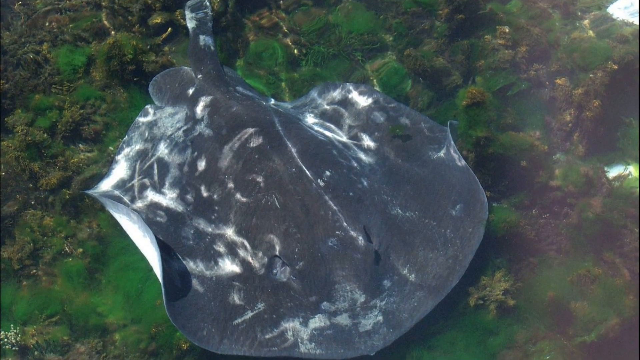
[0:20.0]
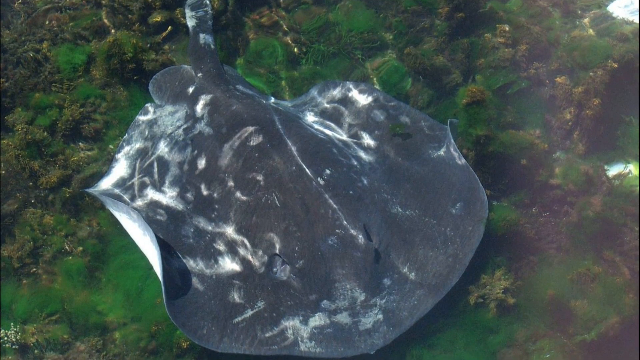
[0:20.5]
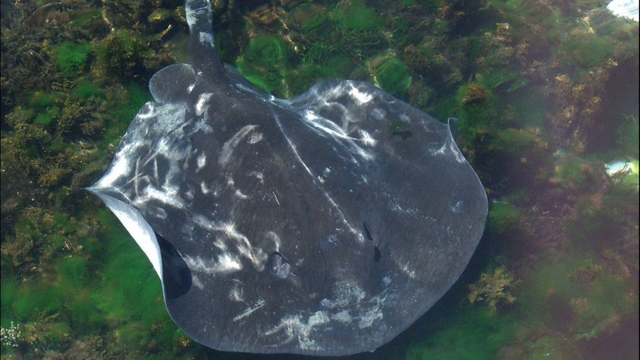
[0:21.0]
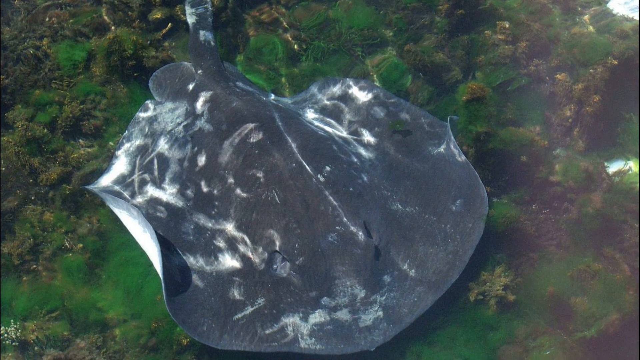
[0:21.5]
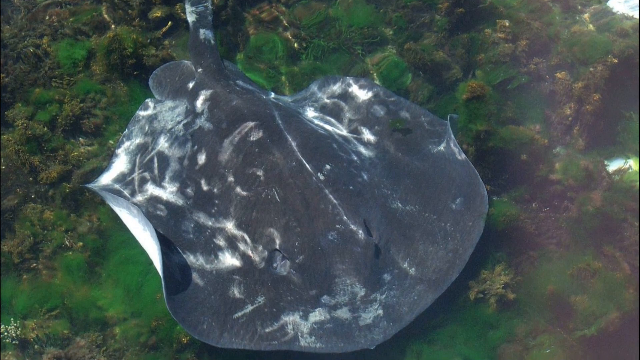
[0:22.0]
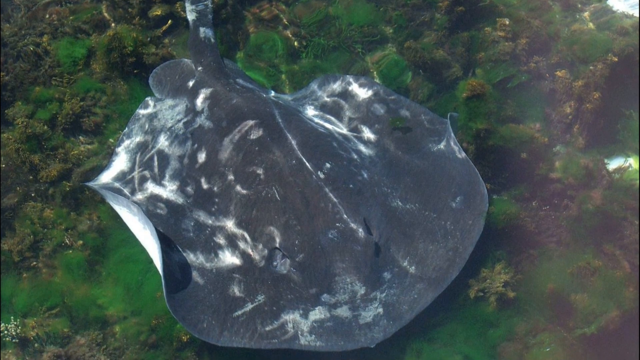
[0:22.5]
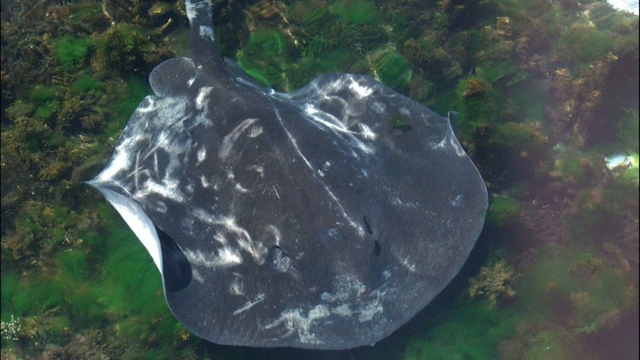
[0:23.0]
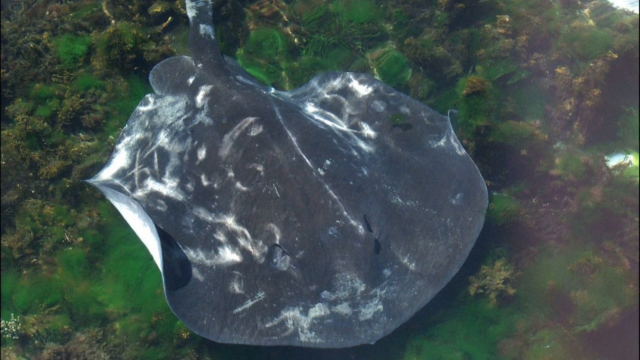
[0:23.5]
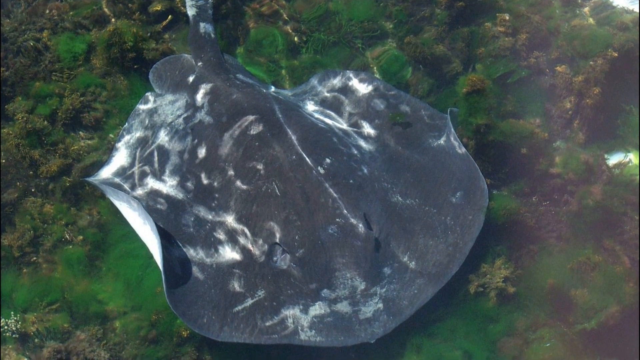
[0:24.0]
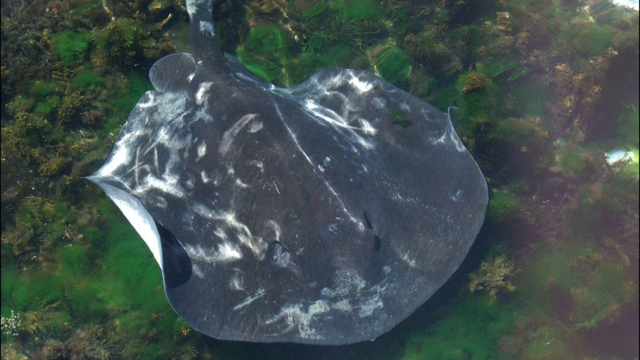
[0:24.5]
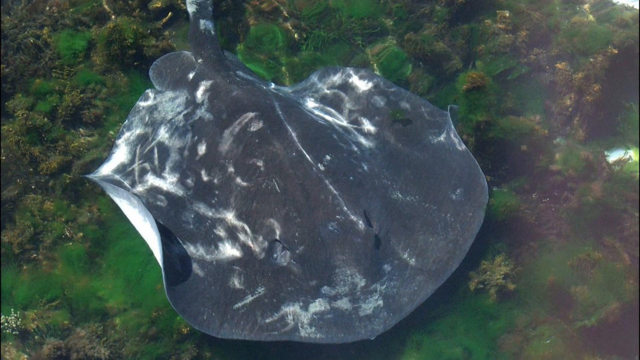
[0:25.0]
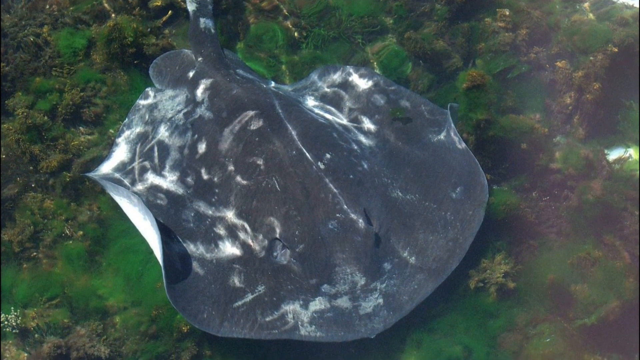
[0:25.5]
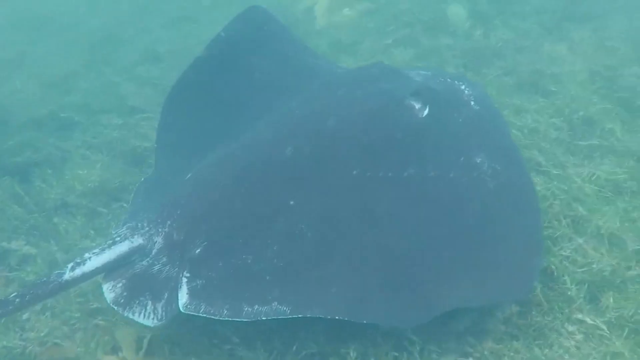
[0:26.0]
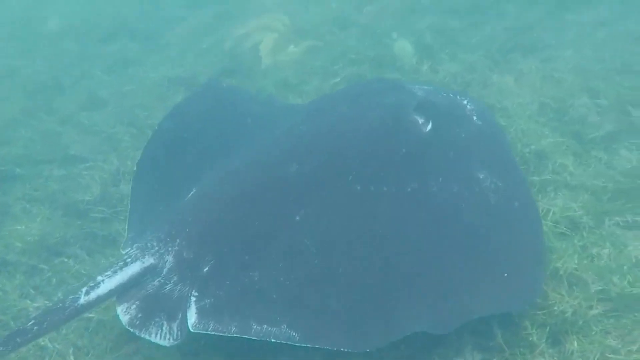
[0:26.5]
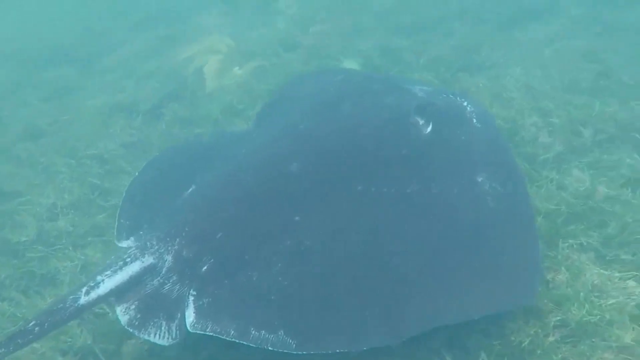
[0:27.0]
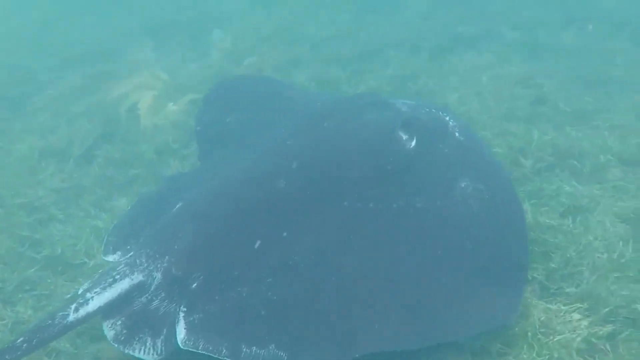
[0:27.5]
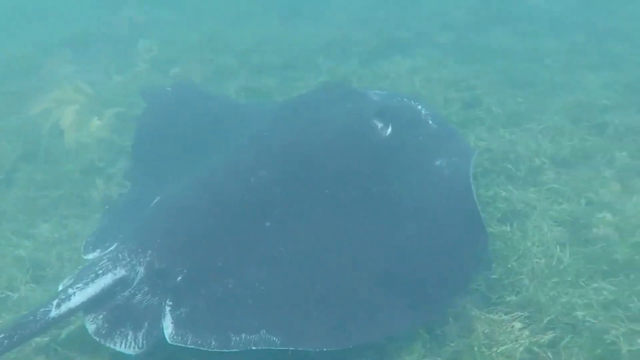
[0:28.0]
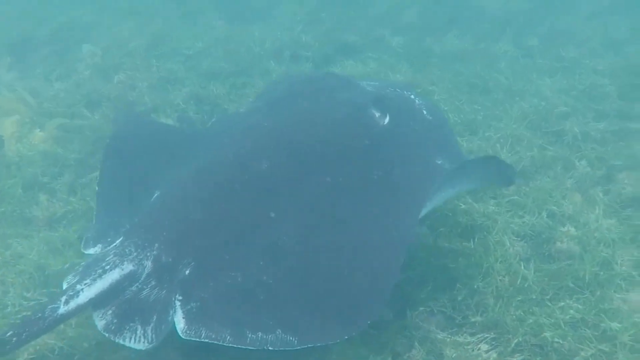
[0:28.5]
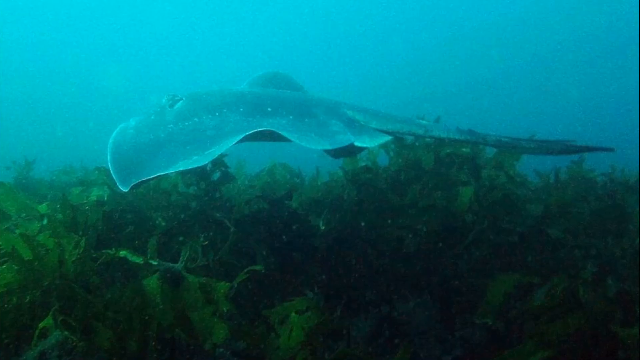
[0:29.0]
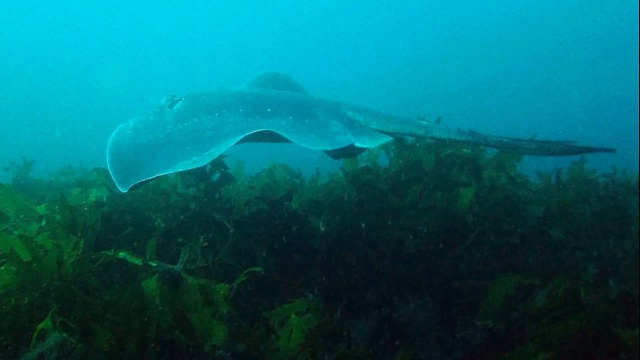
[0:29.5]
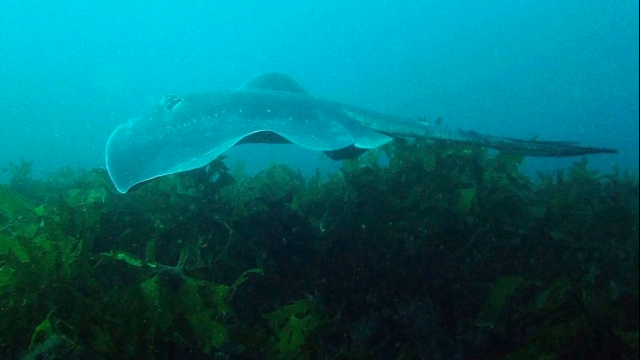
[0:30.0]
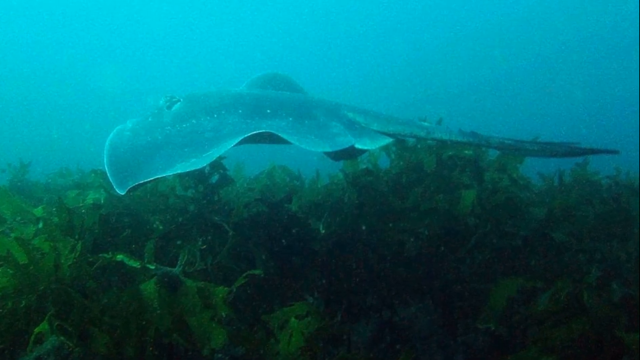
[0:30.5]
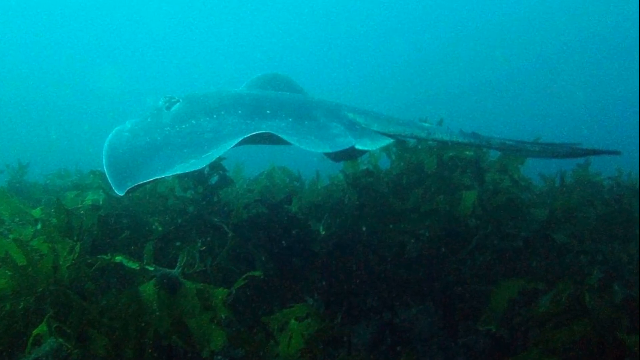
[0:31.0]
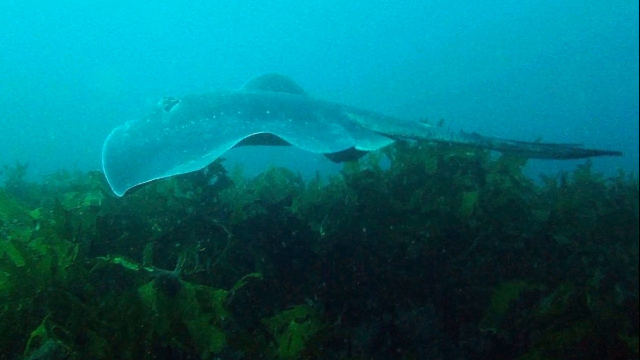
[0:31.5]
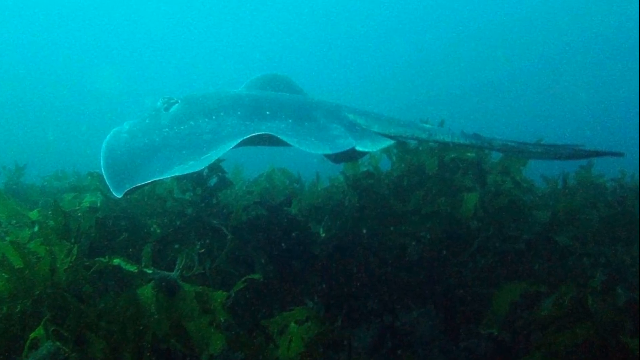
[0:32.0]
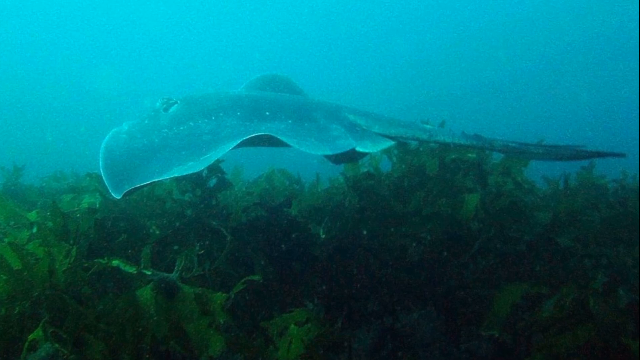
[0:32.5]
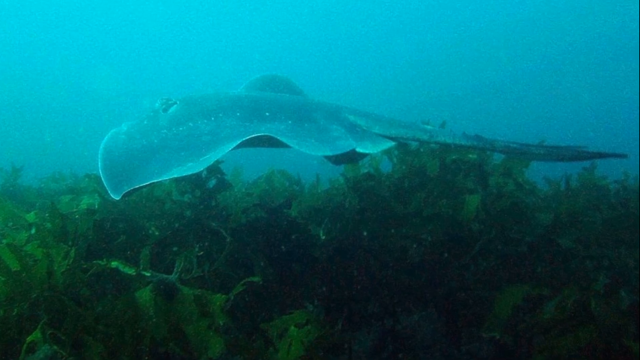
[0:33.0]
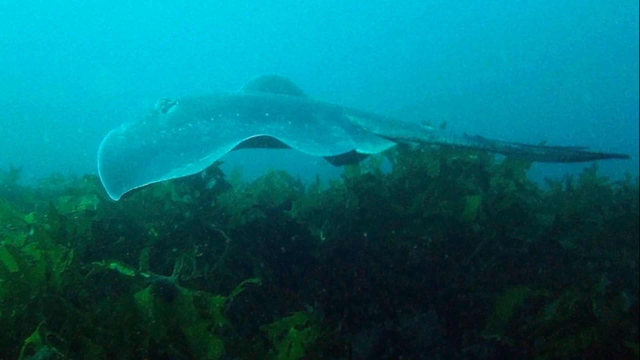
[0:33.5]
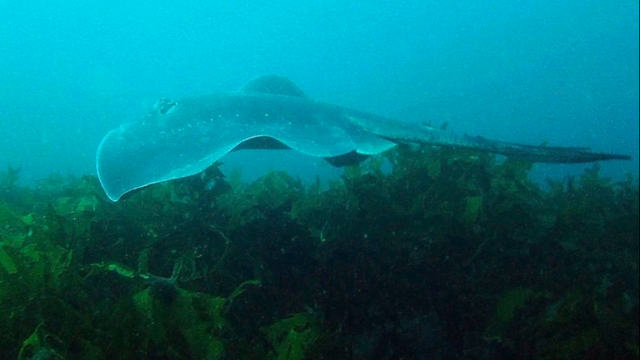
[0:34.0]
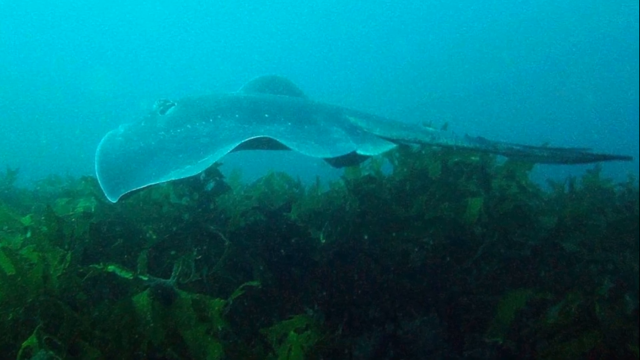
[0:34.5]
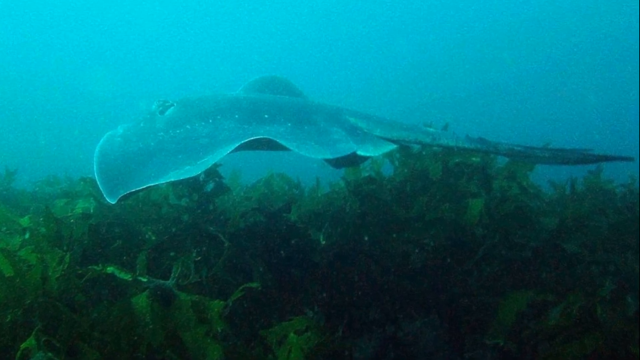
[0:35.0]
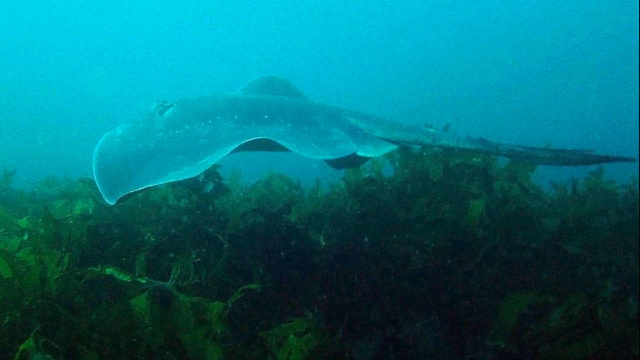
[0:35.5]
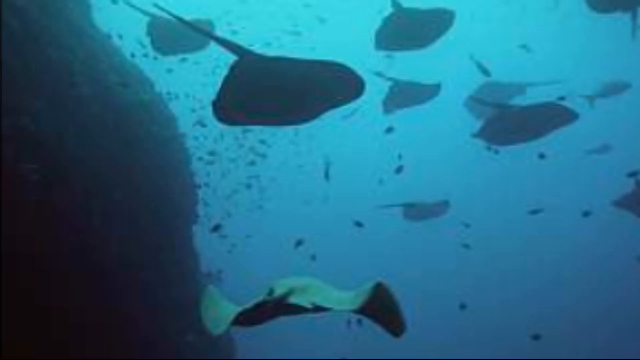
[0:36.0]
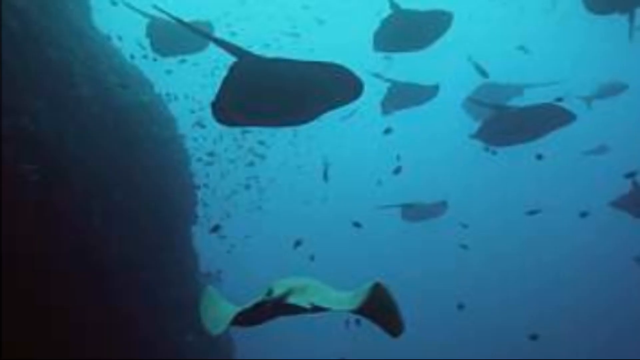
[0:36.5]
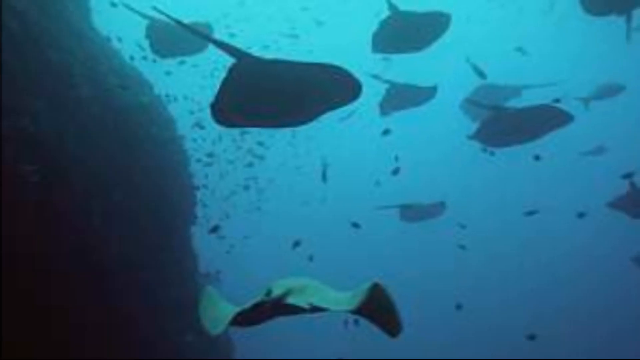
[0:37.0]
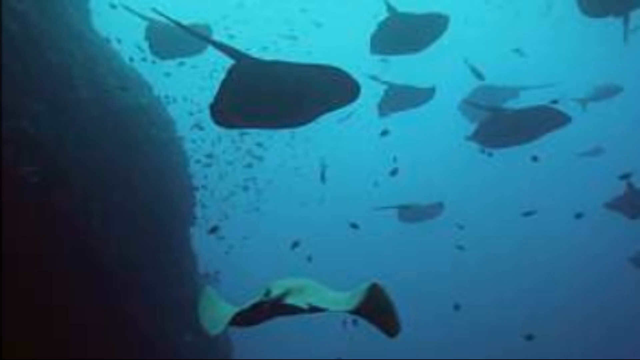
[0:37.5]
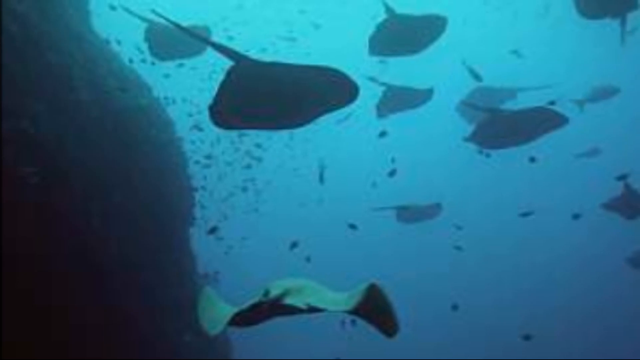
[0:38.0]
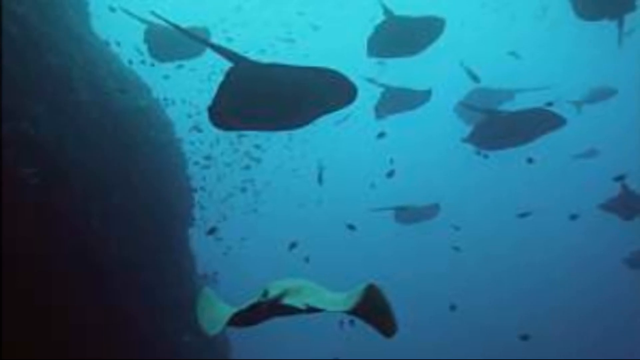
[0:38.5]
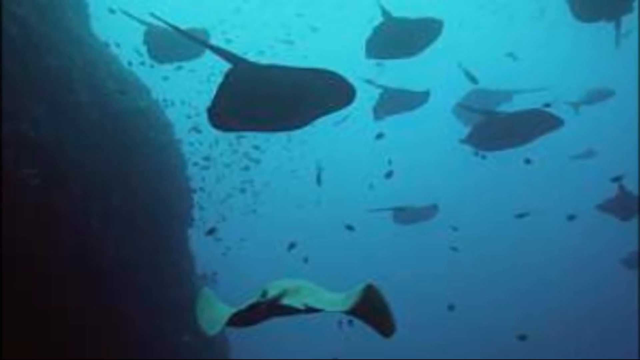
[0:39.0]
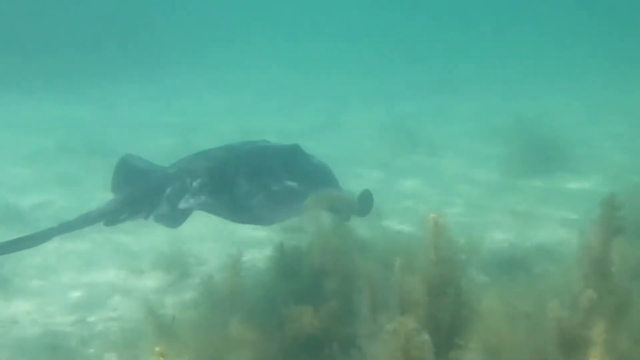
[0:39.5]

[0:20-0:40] The stingray is on what seems to be a slab above water, with some moss underneath it; the stingray is not submerged in the water. It is predominantly dark gray, with some white on its belly. Next, a stingray swims along the ocean floor, where there is lots of seaweed and seagrass. A side view shows the stingray swimming above the seaweed; it is quite large, and its skin looks very wavy. Next, more than 10 stingrays swim in the ocean. Lastly, another stingray swims by itself. The water is very clear and greenish-blue, and the sea floor is very clean, with no garbage, filled only with seaweed and seagrass.